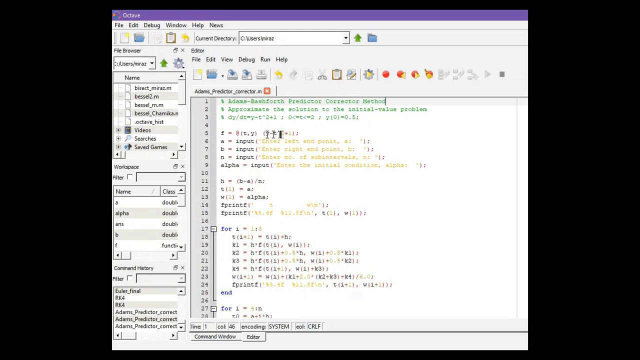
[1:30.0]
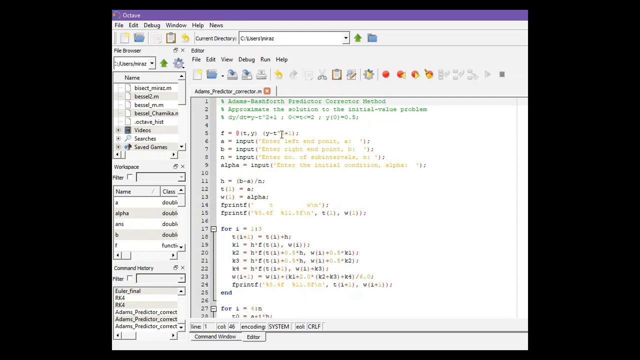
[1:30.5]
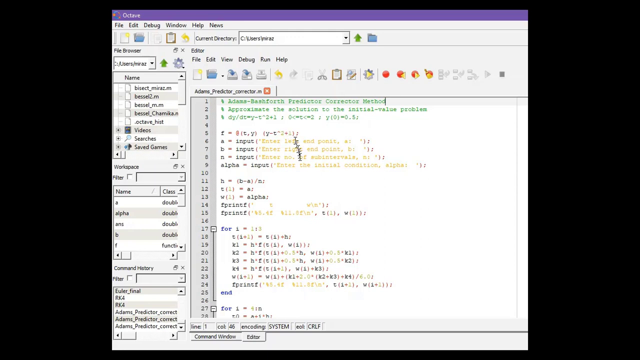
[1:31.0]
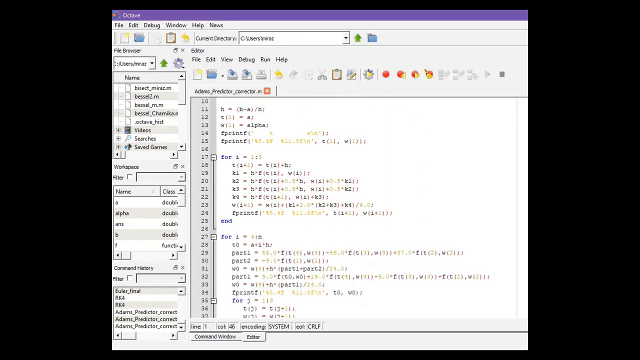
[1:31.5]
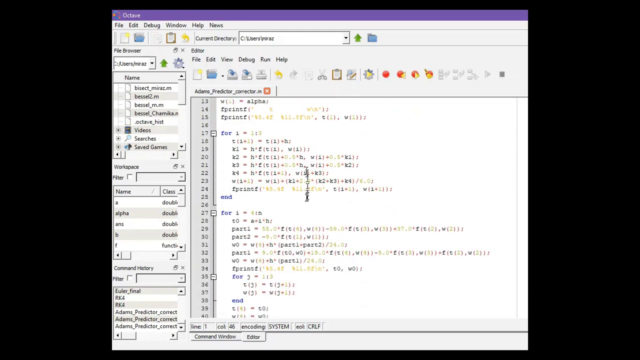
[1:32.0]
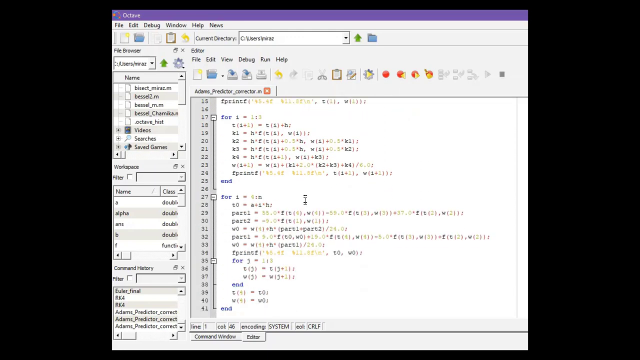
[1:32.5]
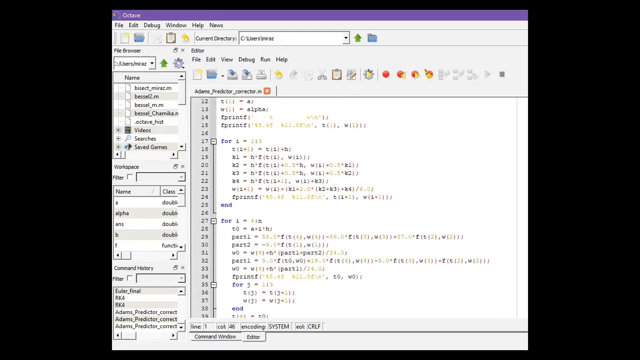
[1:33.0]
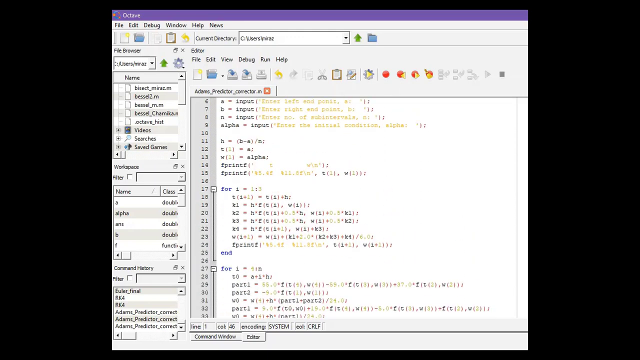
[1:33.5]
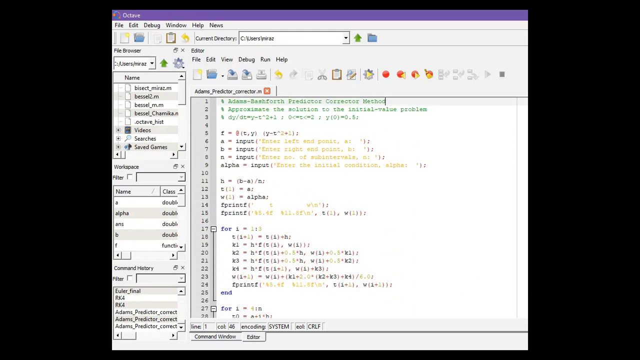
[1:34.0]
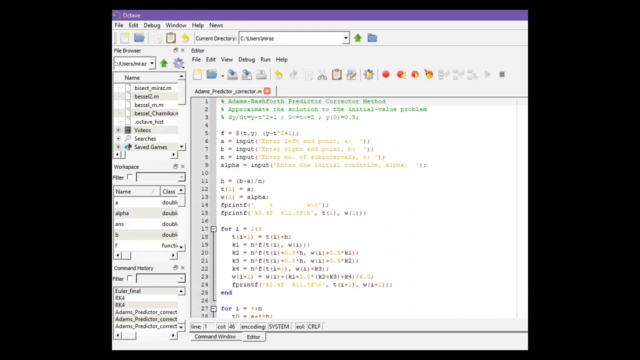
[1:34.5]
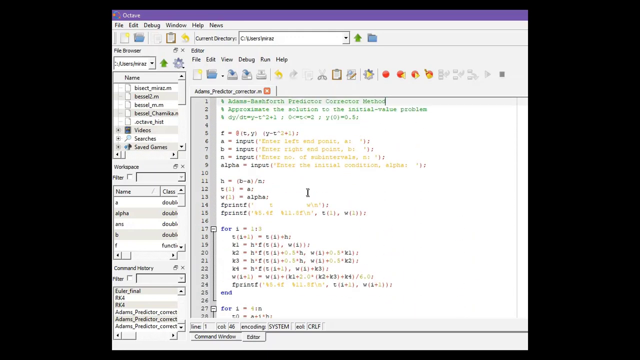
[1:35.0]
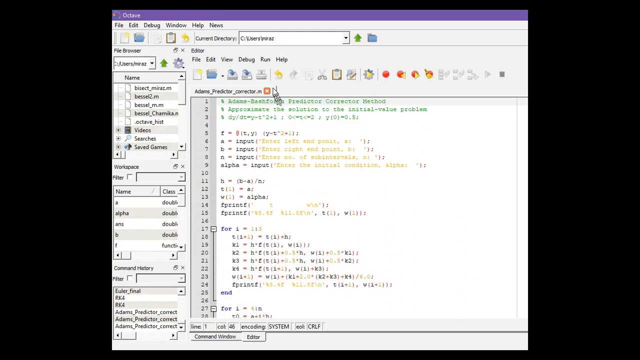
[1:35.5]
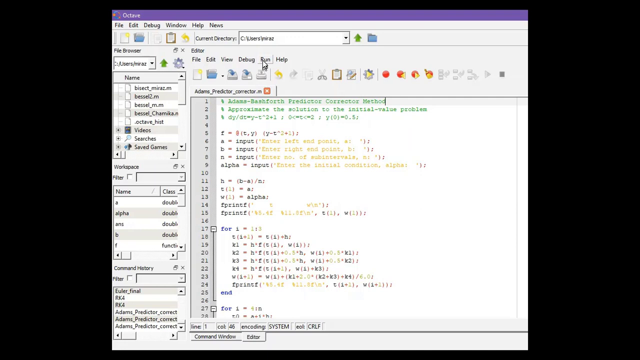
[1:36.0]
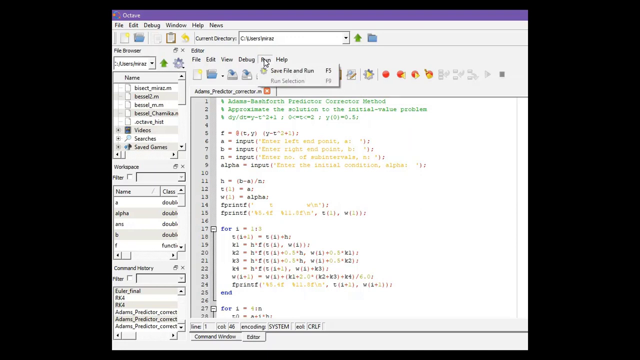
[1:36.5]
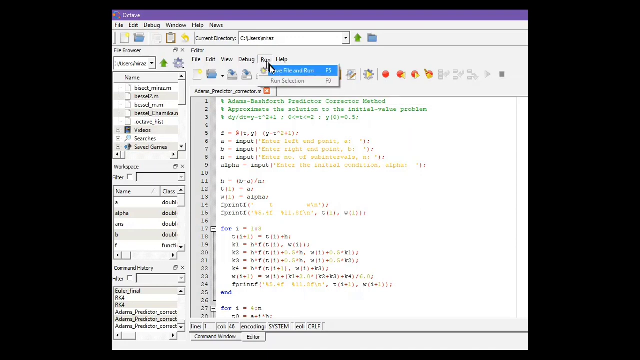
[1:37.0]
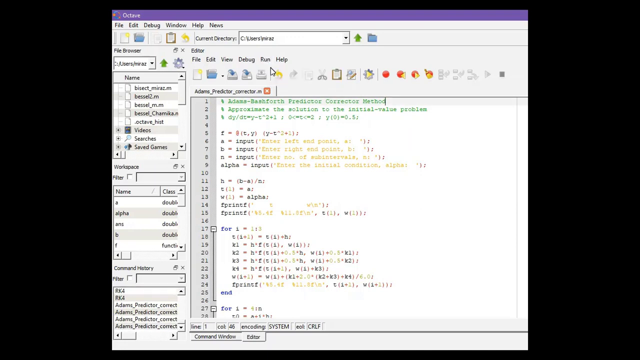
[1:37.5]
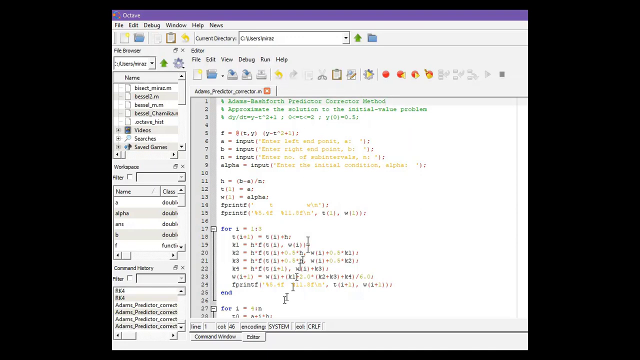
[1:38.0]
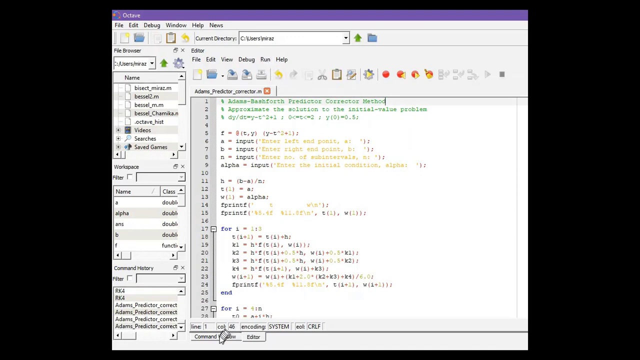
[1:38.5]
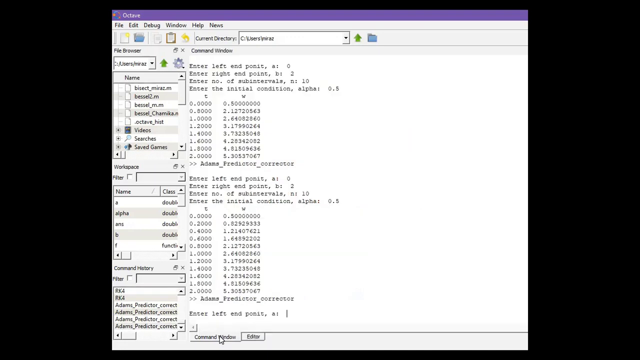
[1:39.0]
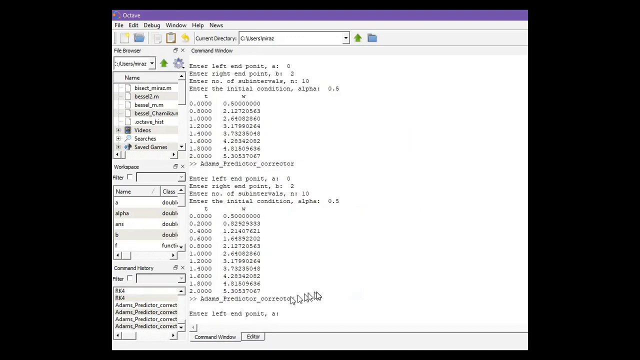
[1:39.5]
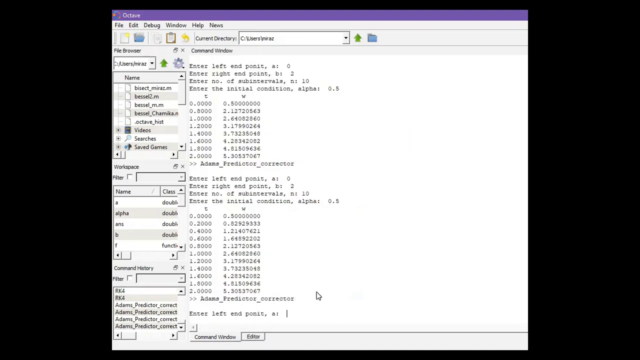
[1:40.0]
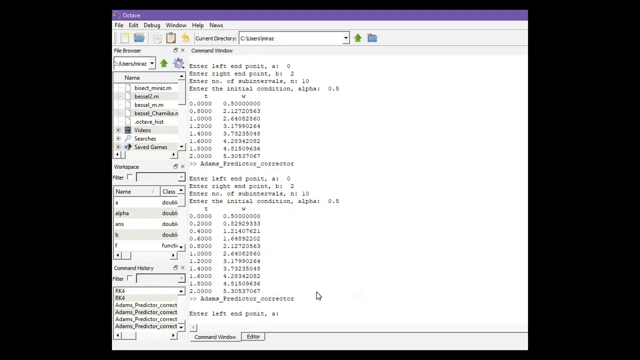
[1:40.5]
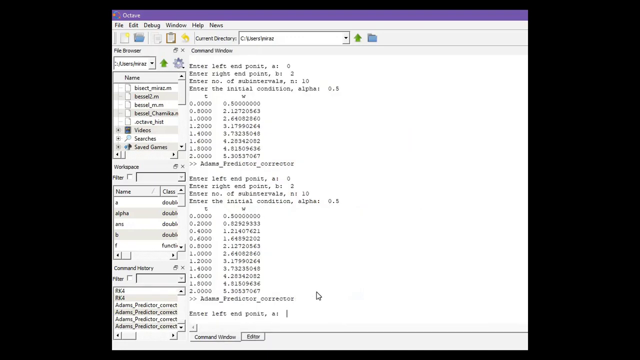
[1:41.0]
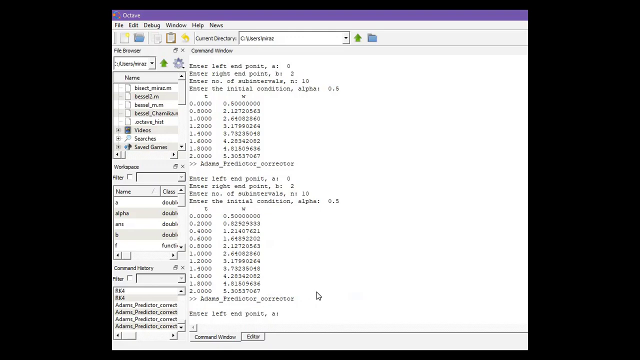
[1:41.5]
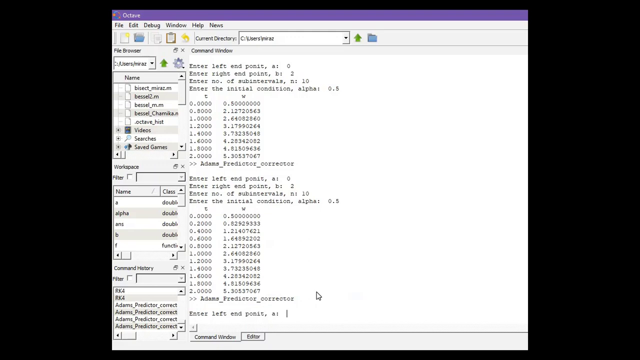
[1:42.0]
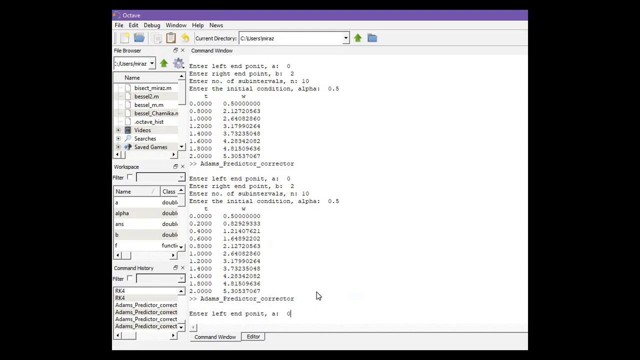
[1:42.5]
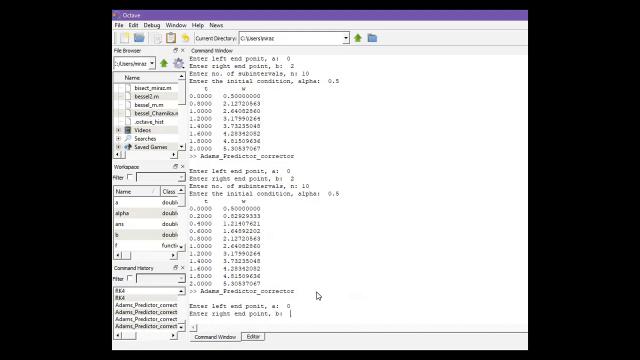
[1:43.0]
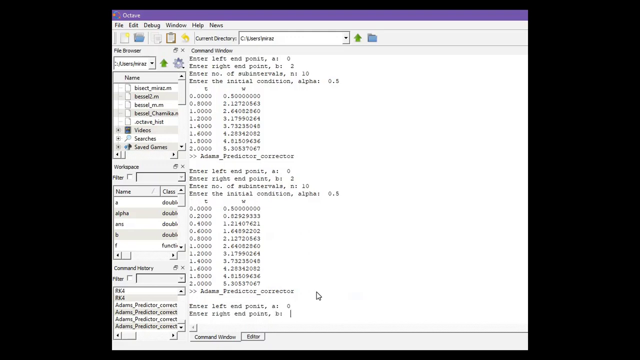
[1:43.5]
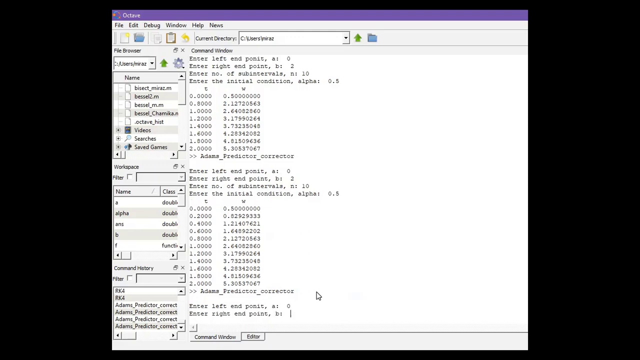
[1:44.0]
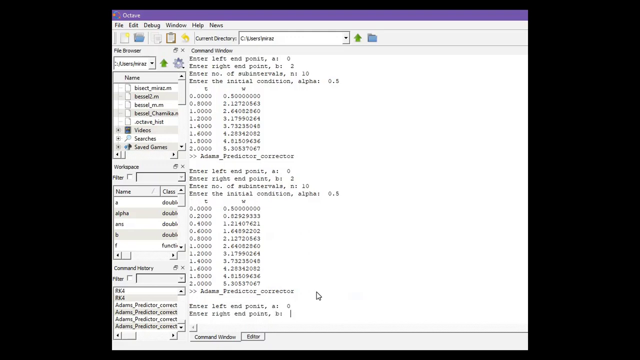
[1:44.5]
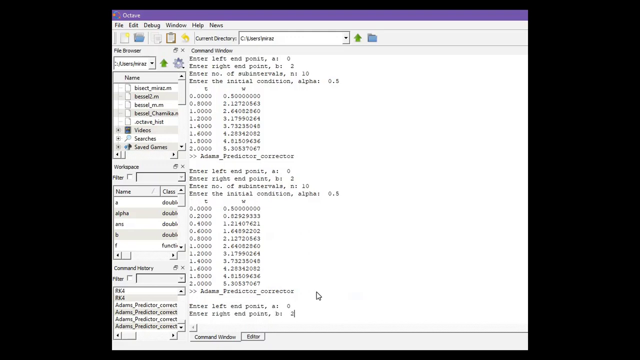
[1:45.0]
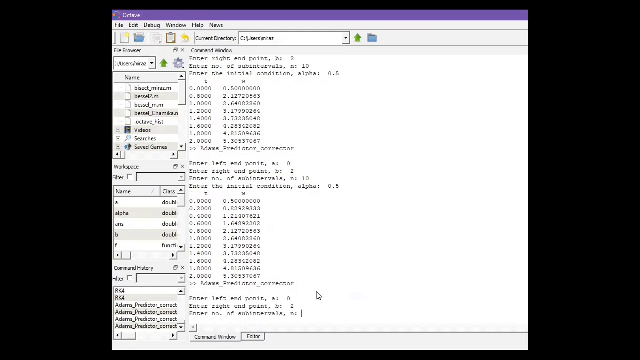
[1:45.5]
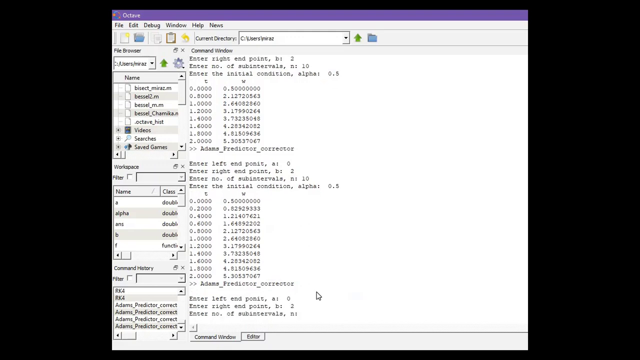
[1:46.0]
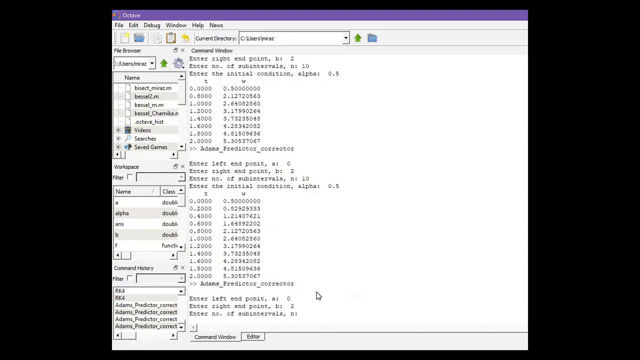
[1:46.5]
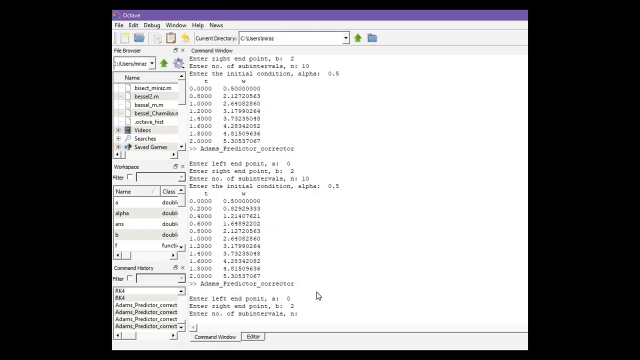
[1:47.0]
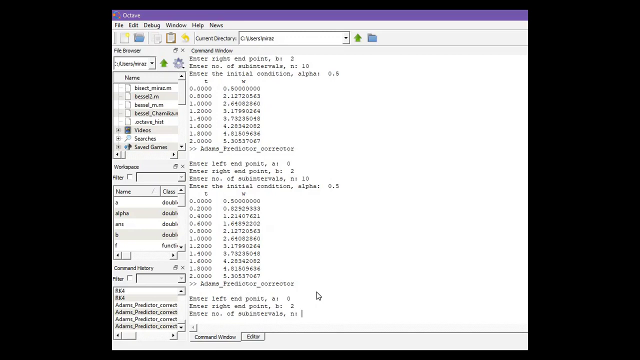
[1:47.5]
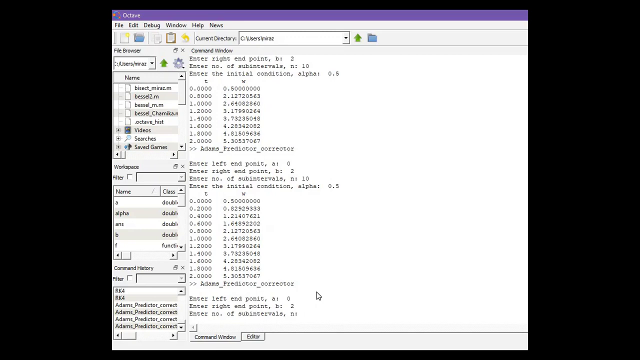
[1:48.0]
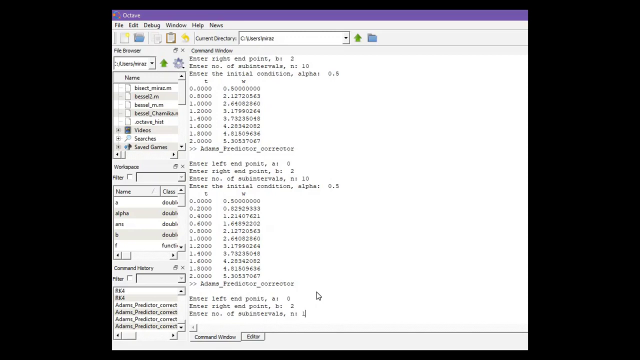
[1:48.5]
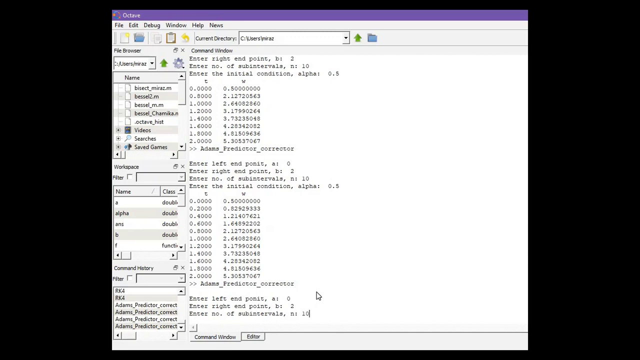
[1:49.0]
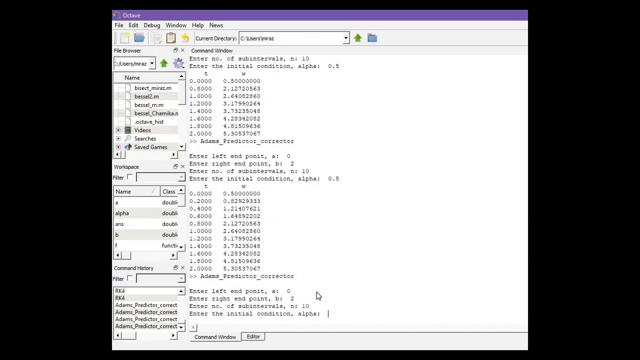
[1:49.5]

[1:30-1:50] A work-type document or text editor is open. The mouse pointer moves around and scrolls through several lines of code. It eventually goes up and clicks the run button, then goes down and clicks the command window tab in the lower part of the document. The command window contains a lot of zeros and ones along with other numbers. In the column running down the left of the page, underneath the name, there appear to be "videos," "searches," and "saved games."